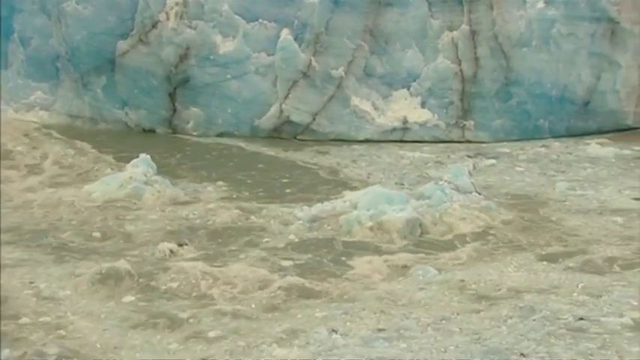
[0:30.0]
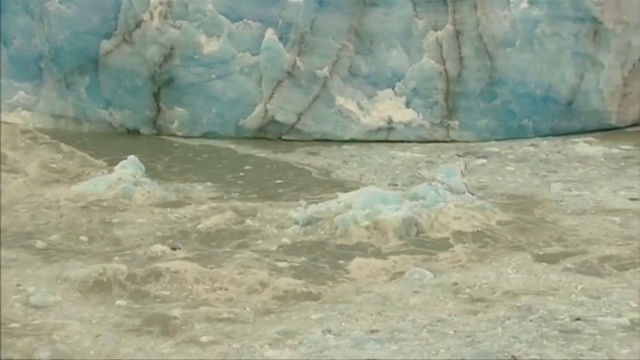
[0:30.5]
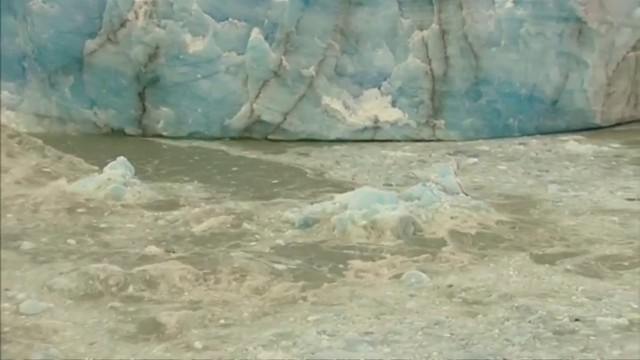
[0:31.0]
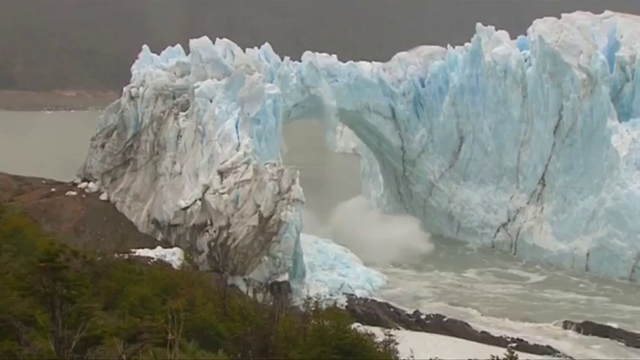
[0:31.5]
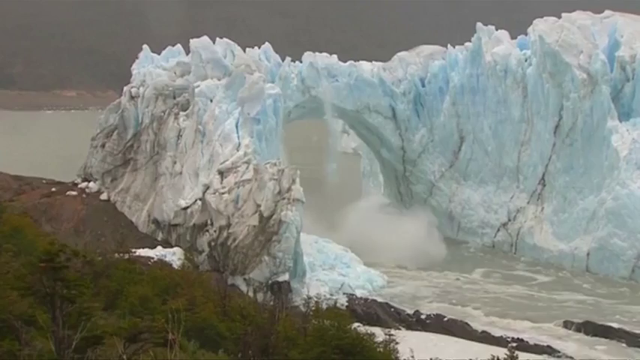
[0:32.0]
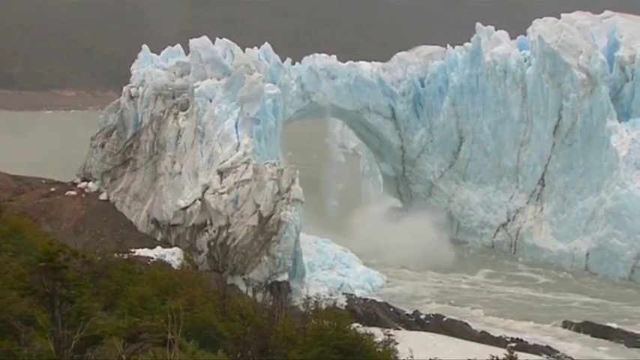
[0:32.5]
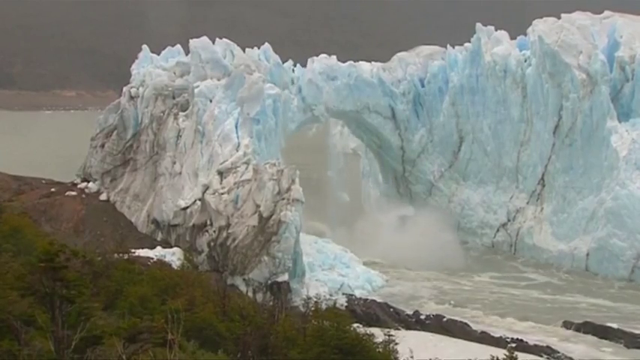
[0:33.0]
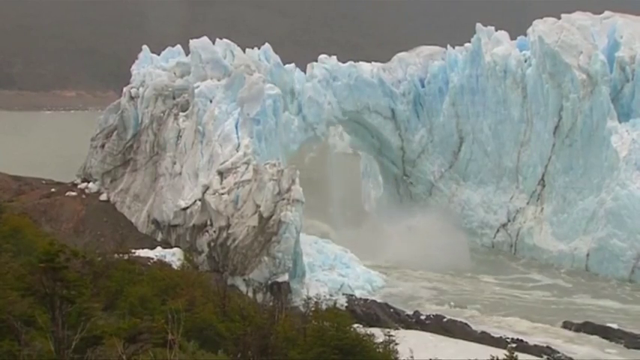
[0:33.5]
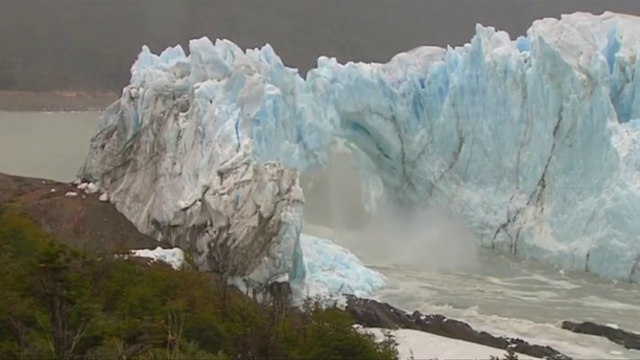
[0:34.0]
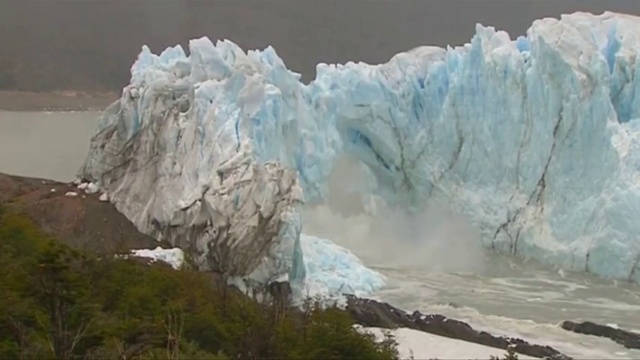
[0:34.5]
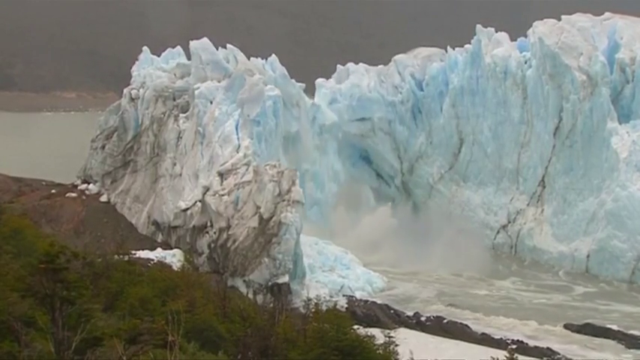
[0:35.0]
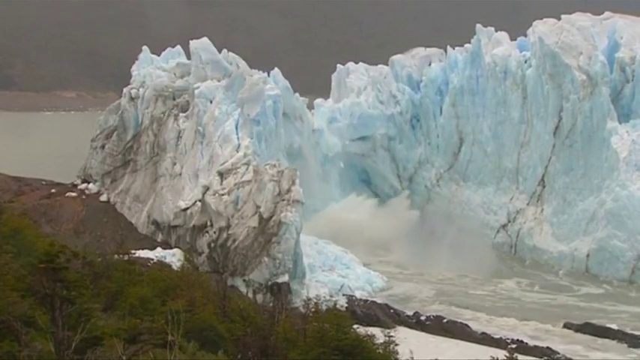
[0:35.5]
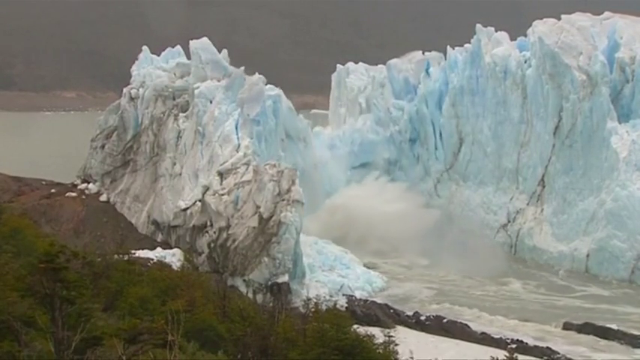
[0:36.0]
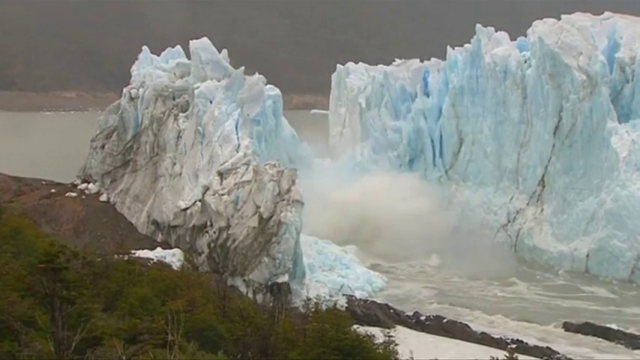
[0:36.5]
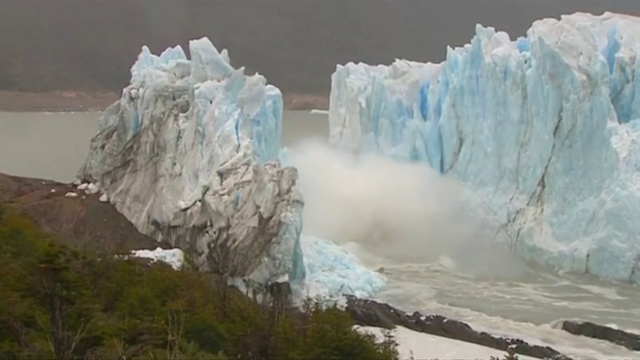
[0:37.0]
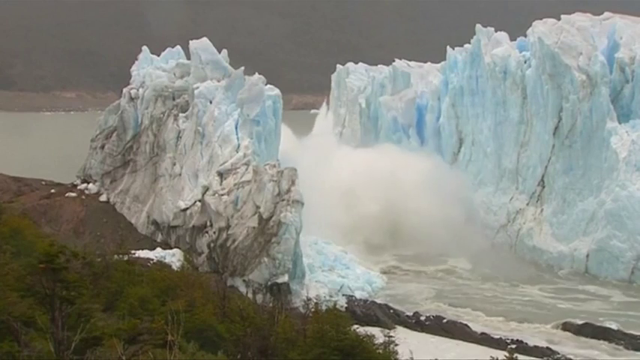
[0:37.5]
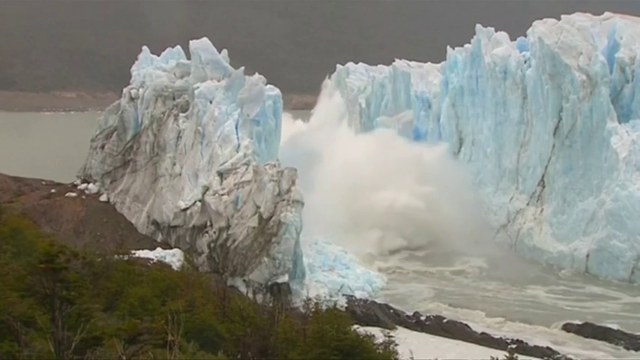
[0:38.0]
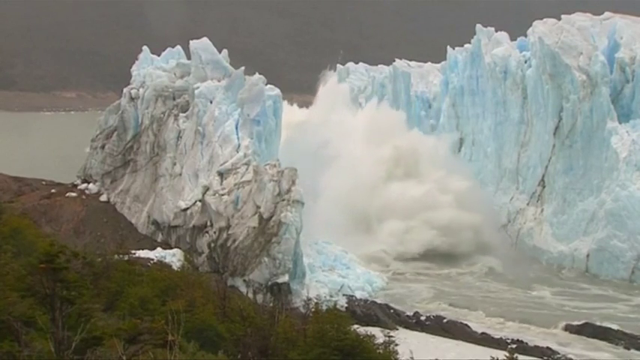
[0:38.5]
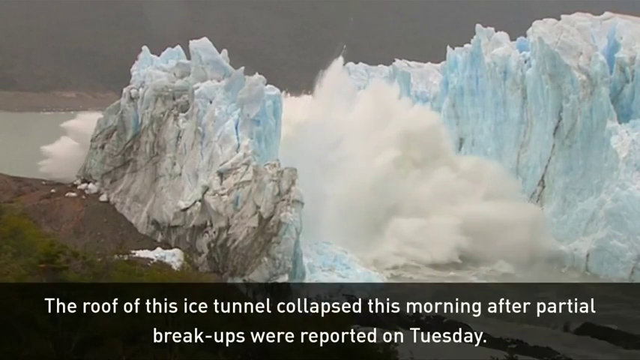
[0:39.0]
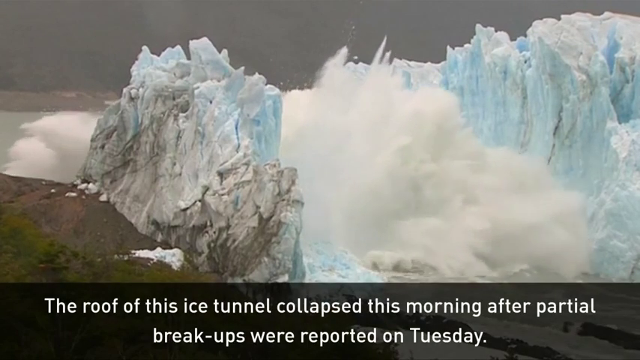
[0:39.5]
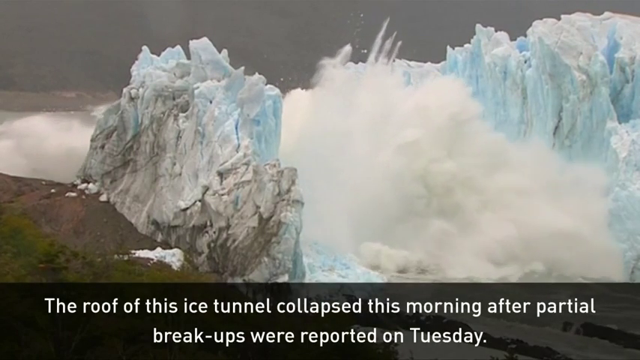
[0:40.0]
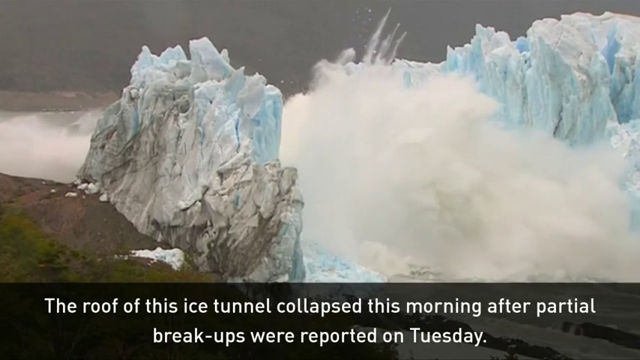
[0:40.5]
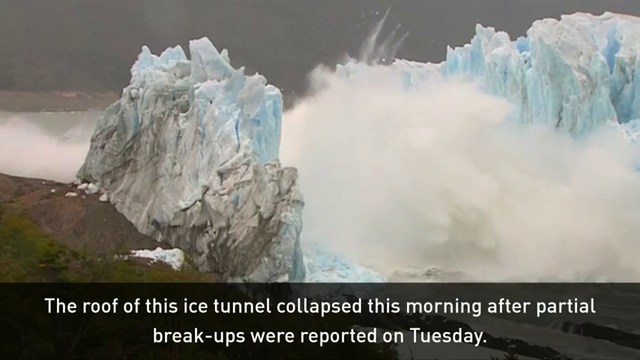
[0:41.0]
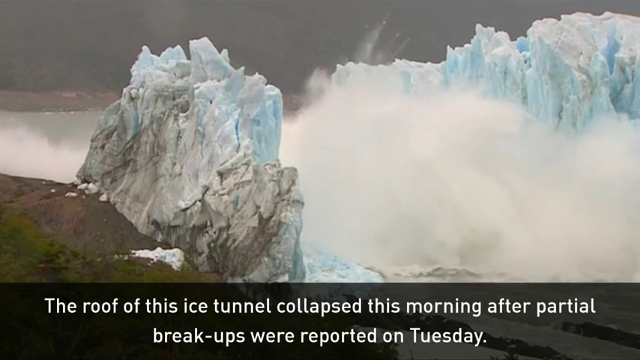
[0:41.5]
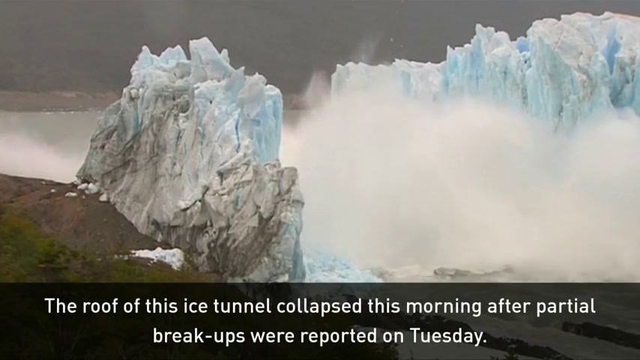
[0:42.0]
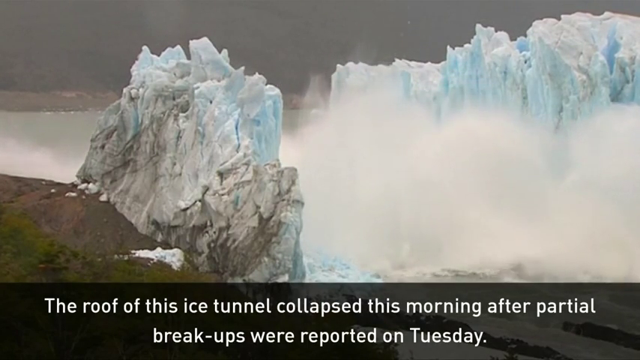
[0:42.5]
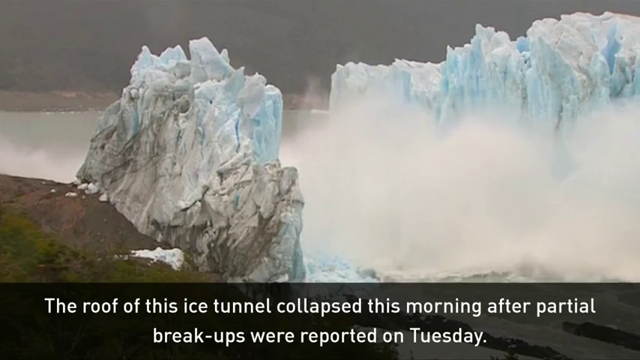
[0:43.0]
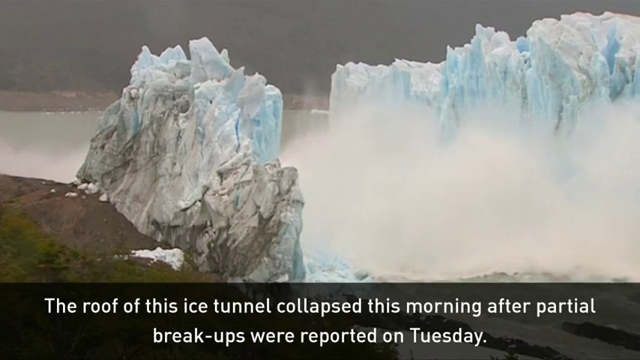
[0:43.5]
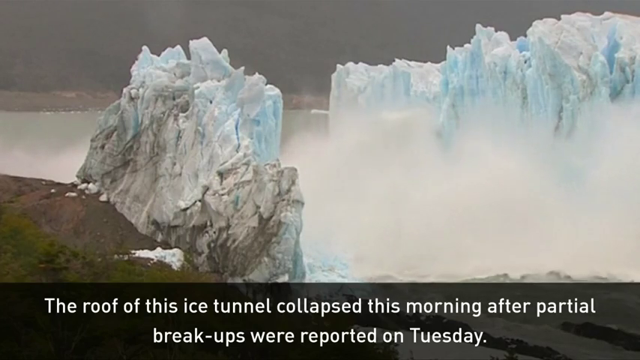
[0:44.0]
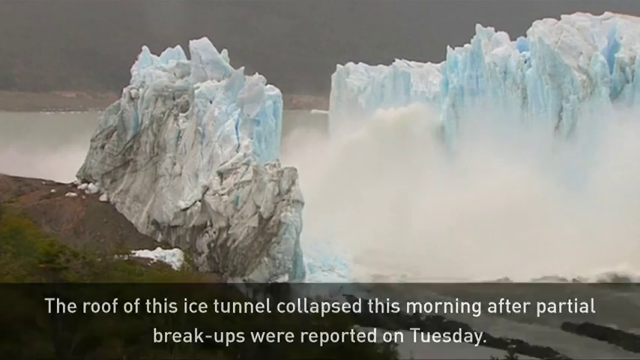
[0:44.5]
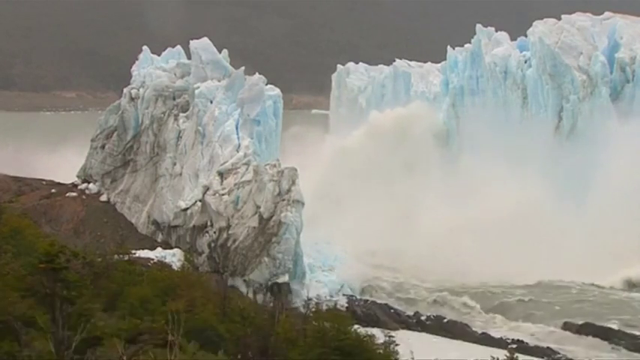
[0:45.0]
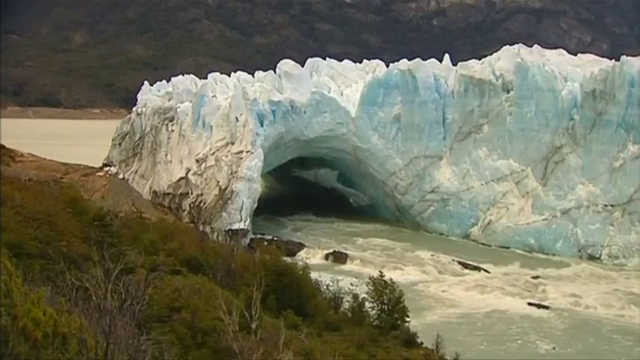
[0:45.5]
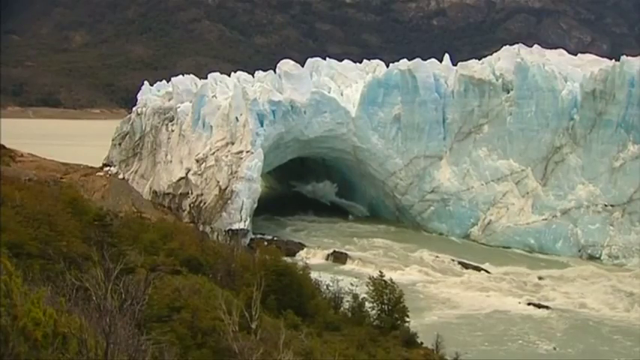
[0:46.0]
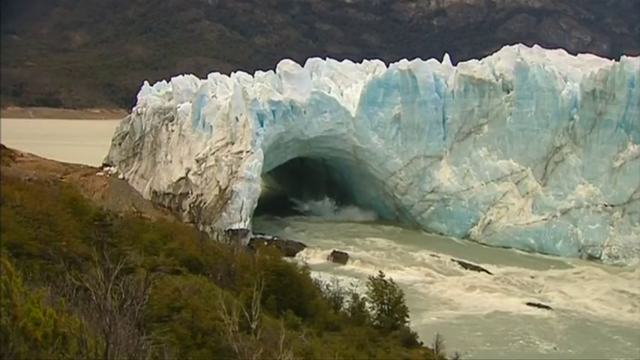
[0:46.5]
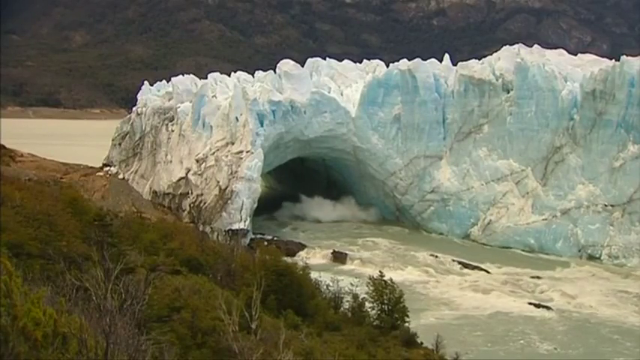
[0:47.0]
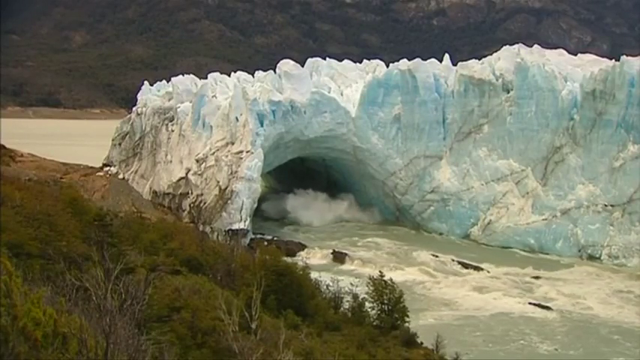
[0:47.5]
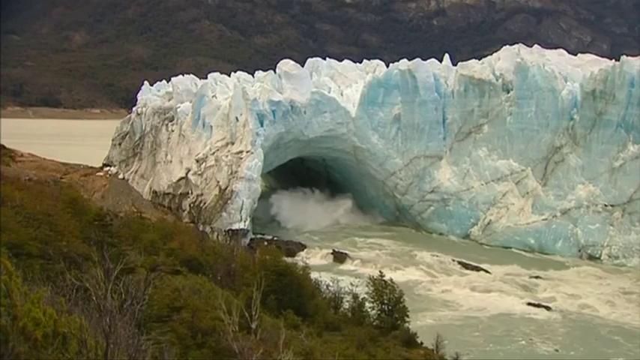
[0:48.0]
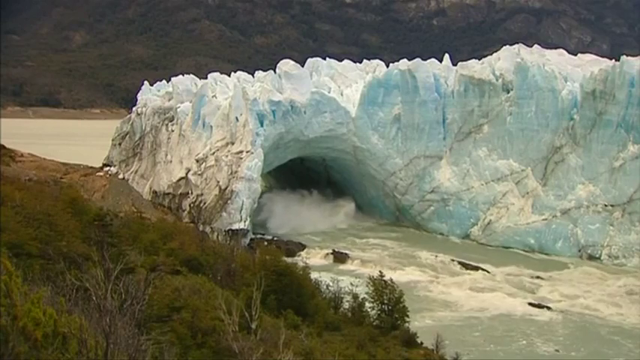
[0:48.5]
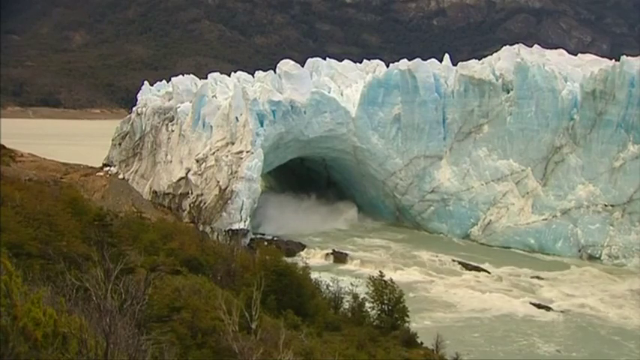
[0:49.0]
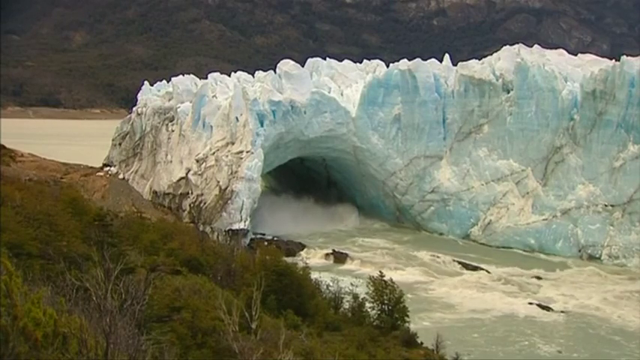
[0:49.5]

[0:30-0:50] The massive chunks that fell into the river float from left to right, and there is pretty decent movement in the river. The video then returns to the initial ice formation that almost forms a bridge over the water. The center, where the bridge part was, falls kind of in slow motion and crashes into the water underneath, causing a massive explosion of water and a splash just as high as the ice formation itself, also in slow motion. Spray goes everywhere and large waves form from the splash. Next is a different, almost tunnel-looking ice formation over a flowing river. Ice from the center of the formation starts crashing into the water, and there is a large splash.